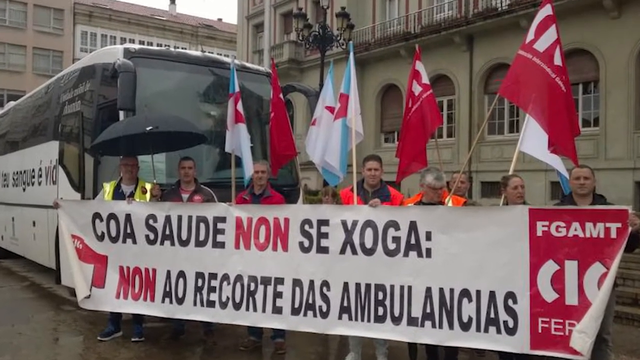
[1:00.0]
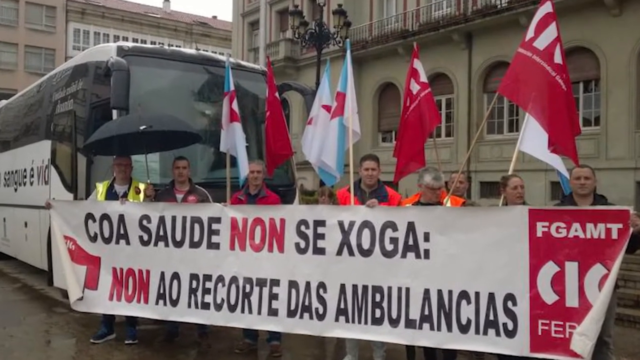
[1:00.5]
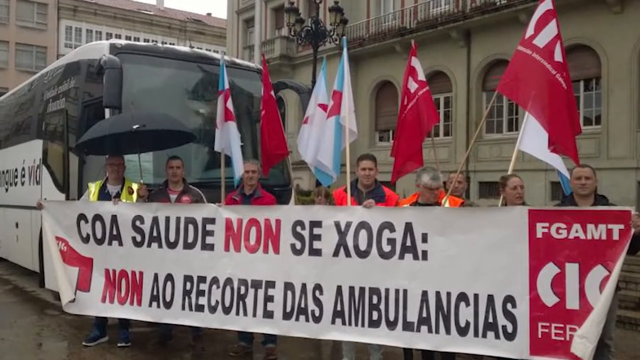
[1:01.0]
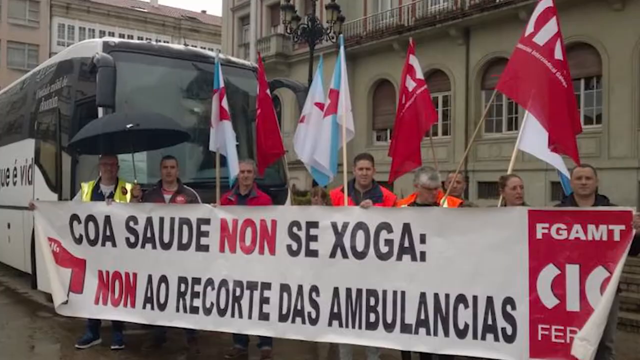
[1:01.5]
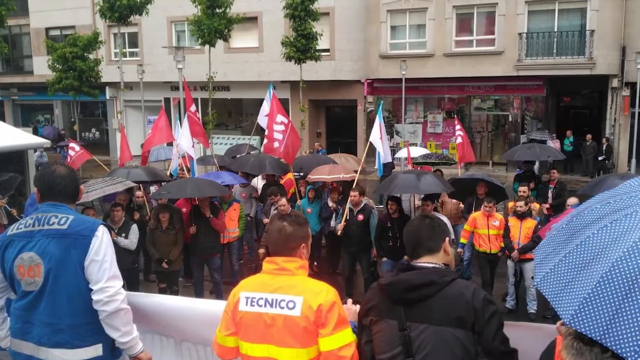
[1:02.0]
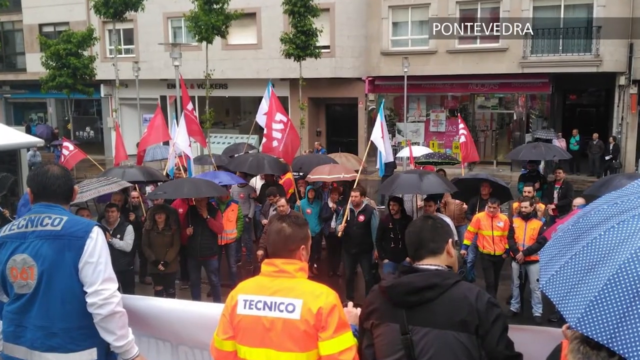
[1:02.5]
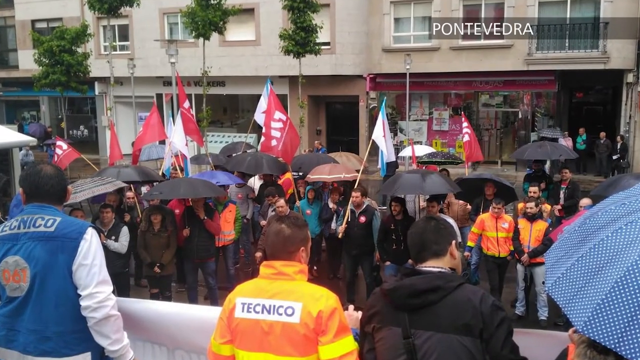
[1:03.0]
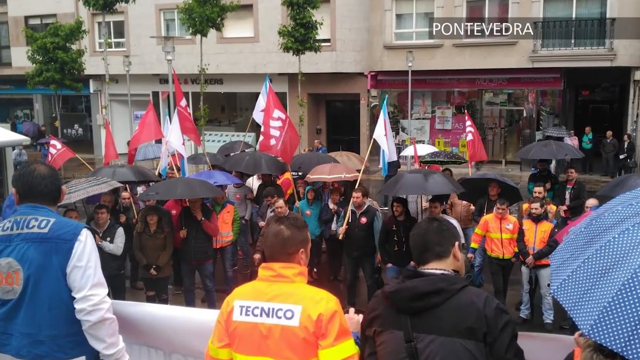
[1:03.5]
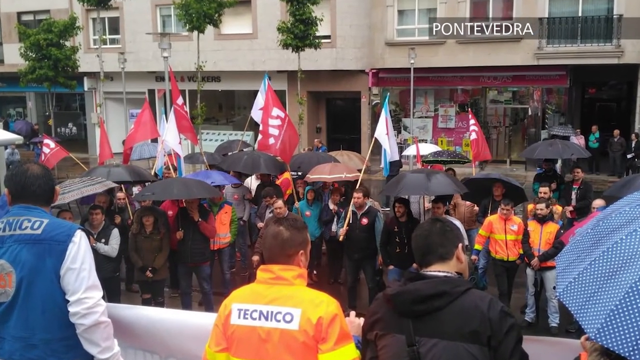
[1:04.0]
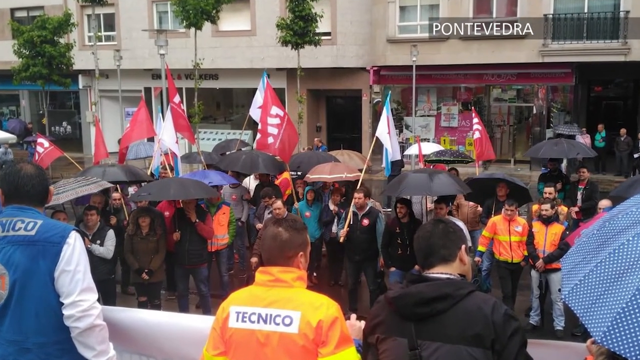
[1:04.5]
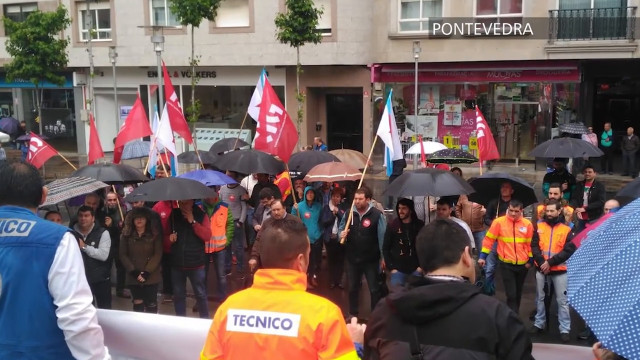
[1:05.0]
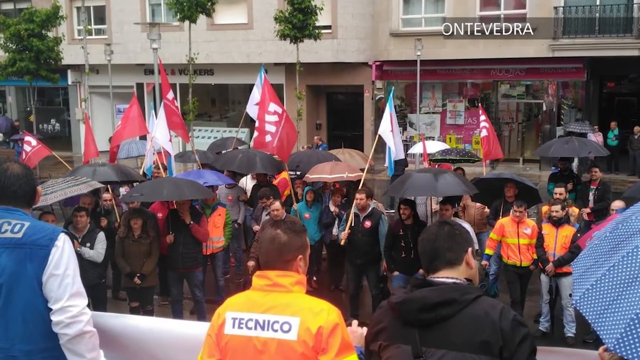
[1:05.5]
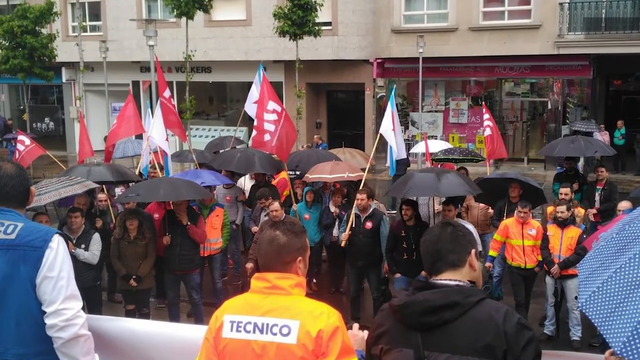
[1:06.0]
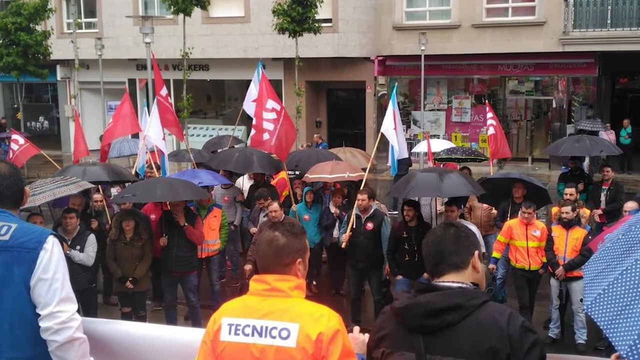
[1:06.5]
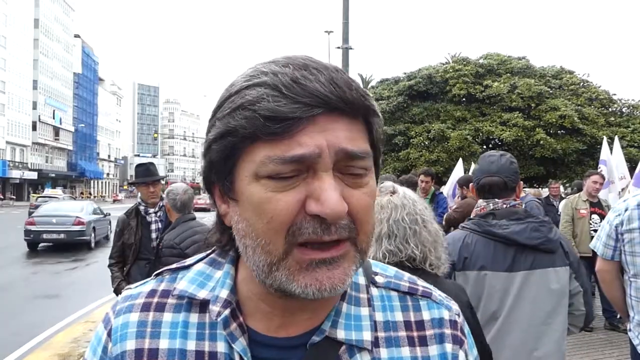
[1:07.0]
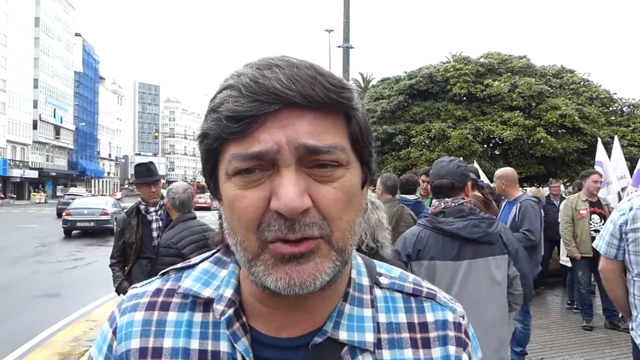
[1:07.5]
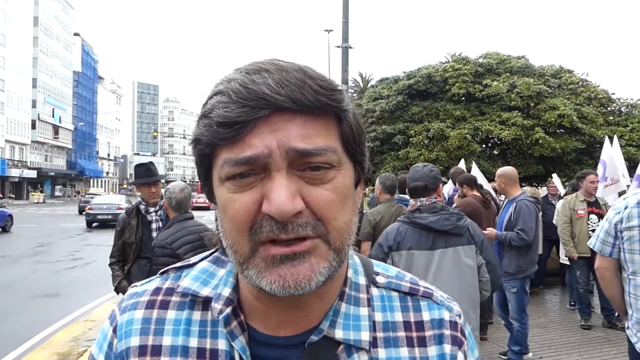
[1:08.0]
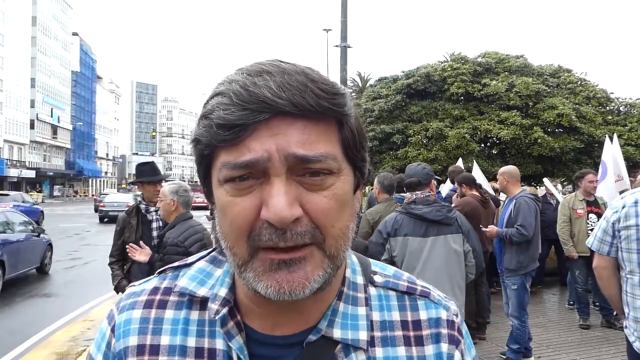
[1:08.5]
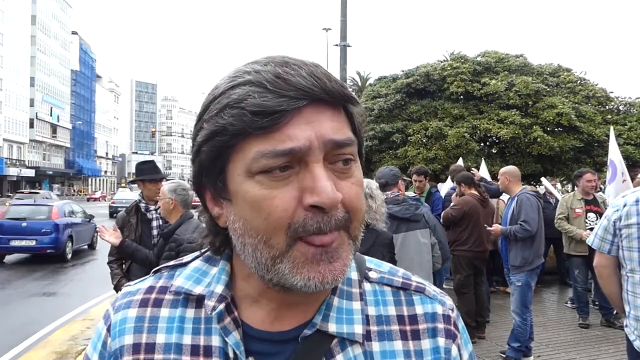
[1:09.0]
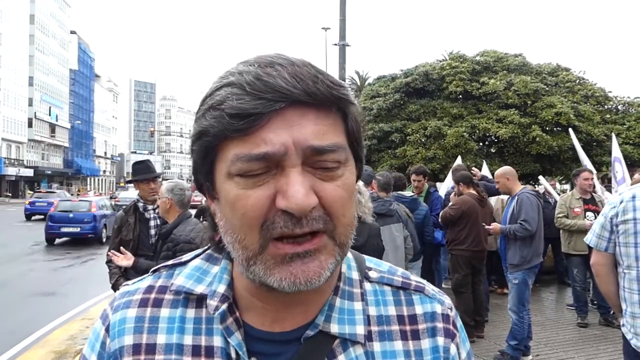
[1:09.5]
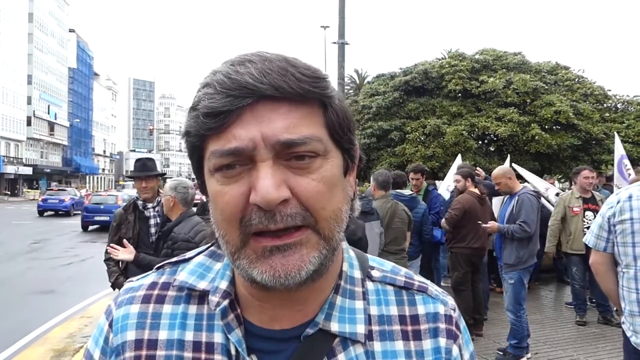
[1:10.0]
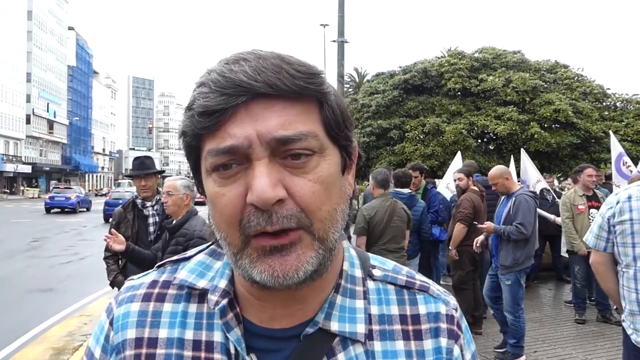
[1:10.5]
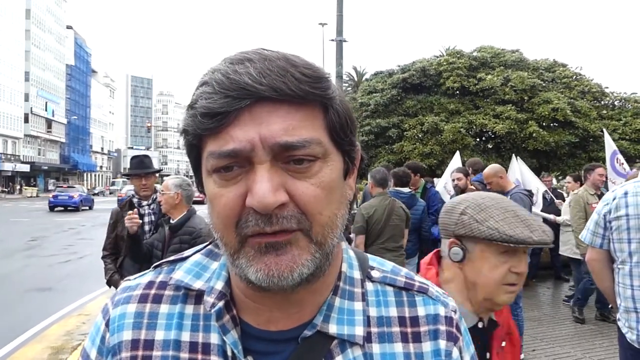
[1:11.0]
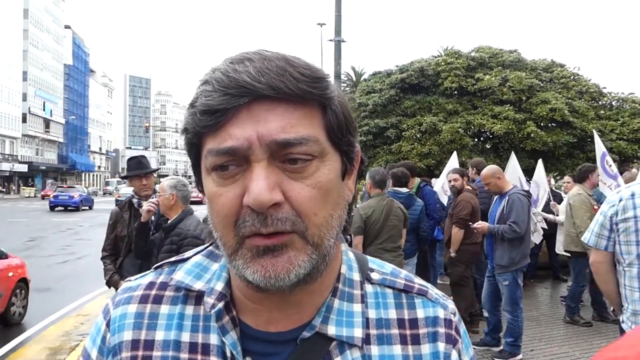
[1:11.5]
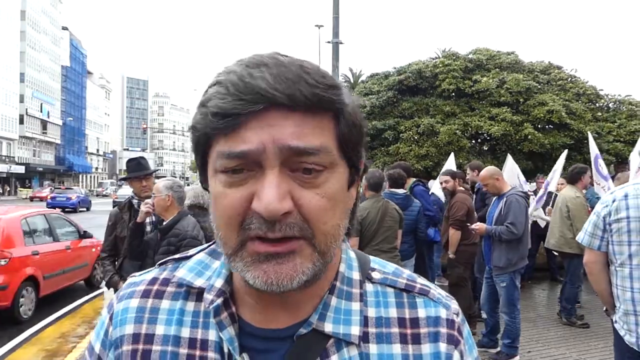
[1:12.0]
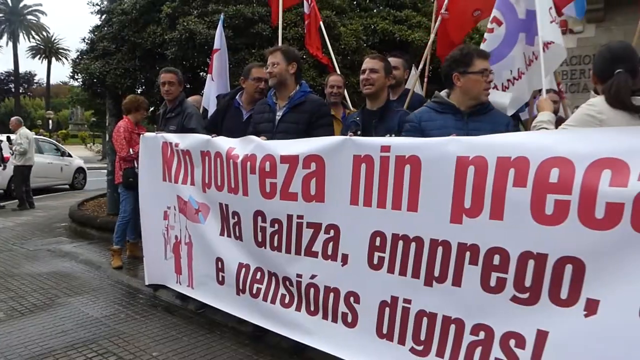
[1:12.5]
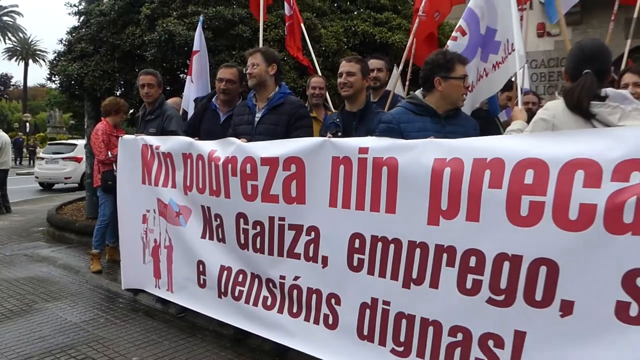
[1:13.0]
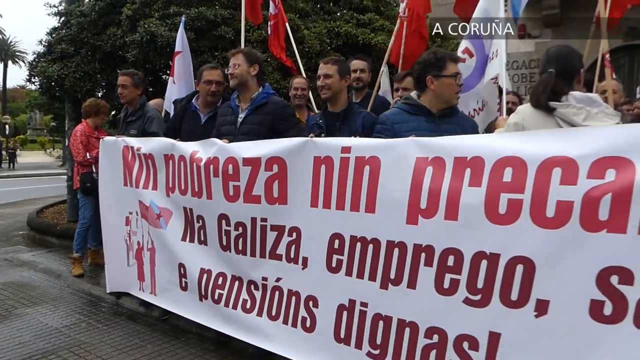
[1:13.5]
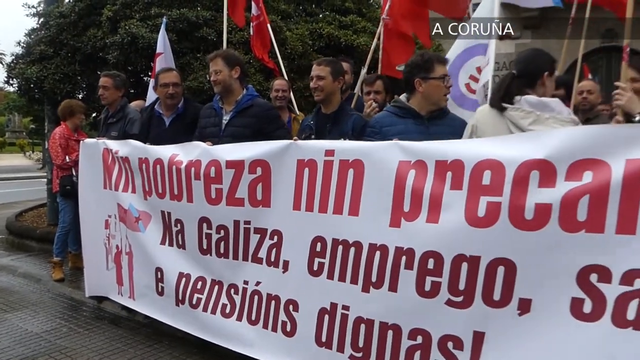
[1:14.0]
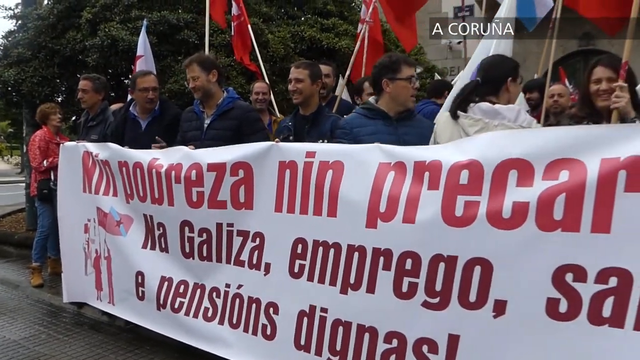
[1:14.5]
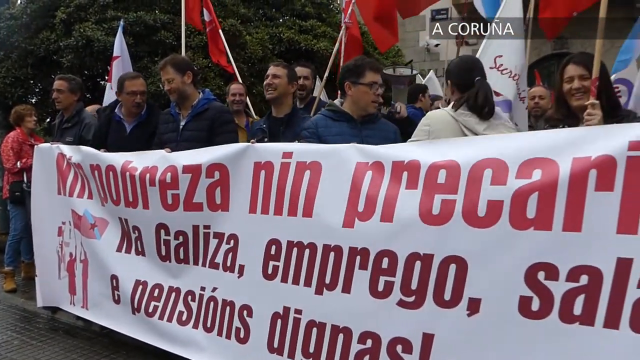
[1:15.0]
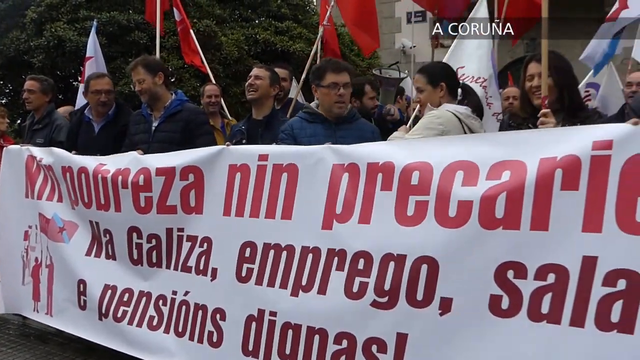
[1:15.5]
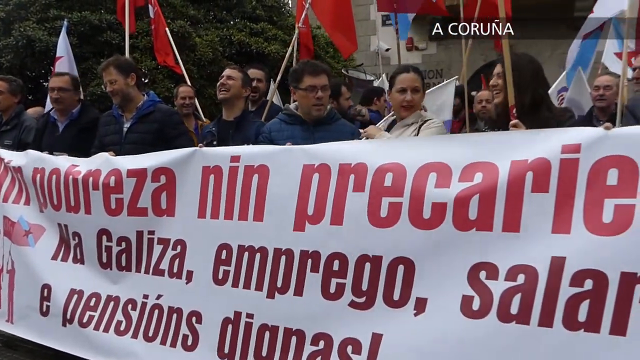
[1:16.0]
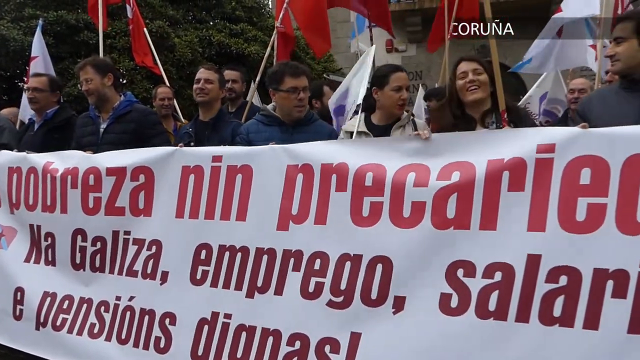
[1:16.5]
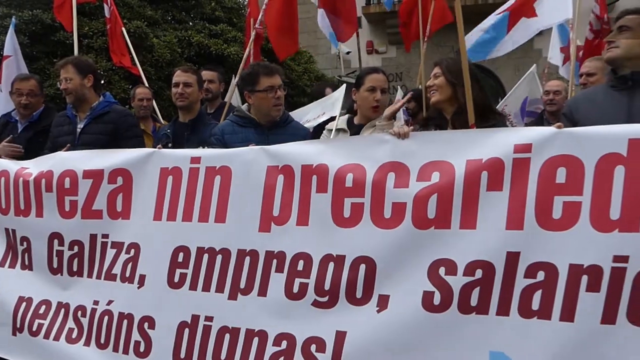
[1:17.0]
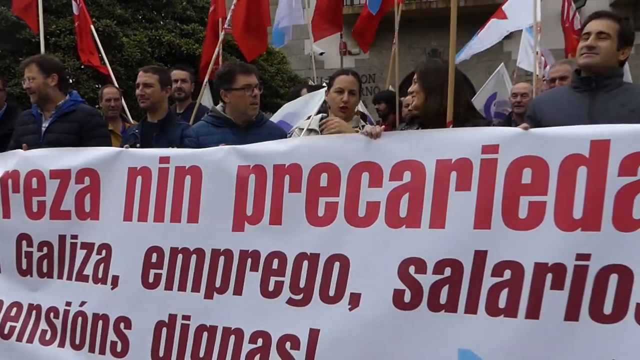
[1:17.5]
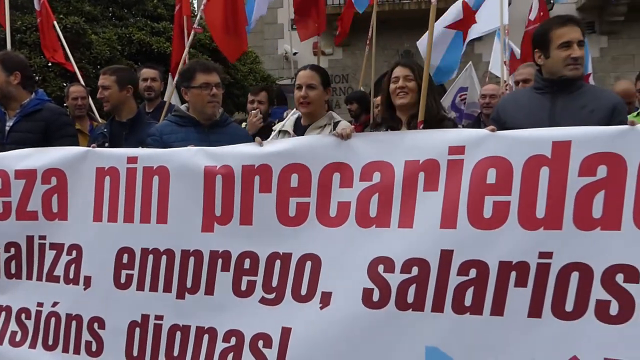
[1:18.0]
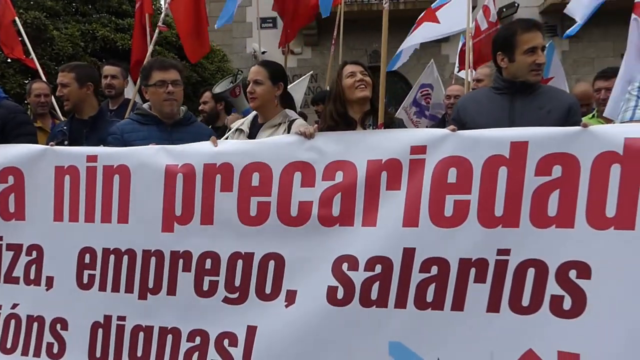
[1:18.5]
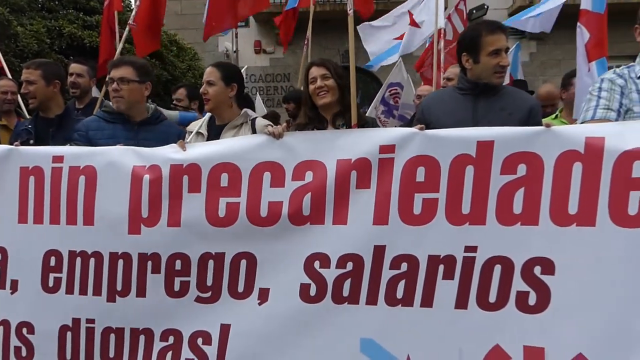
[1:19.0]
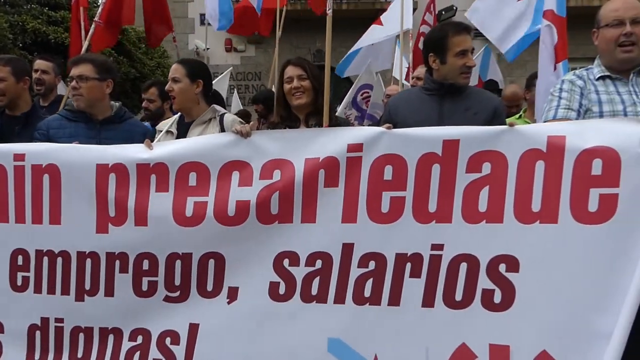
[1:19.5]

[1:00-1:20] The news story about a demonstration concerning ambulance workers shows a photograph of 10 people standing behind a banner. One has a black umbrella and the rest hold flags, probably union flags, along with blue and white striped flags with red stars. A big luxury coach is on the left-hand side, and they stand in front of some kind of Edwardian buildings. Next is a photograph of a group of demonstrators under umbrellas in a kind of shopping centre, with small shops behind them. Three men stand with their backs to the camera on some kind of balcony; one wears a headset, and they appear to be addressing the supporters below. A head-and-shoulders interview shot follows of Jesus, who wears the blue checked shirt and has a stubbly grey beard and moustache and short brown hair. The scene then changes to a different group of demonstrators, many of them smiling even though it is raining.